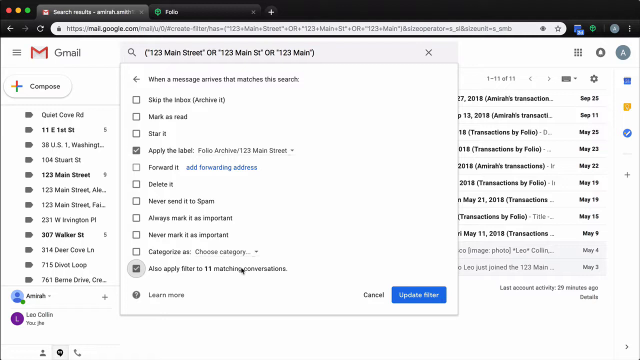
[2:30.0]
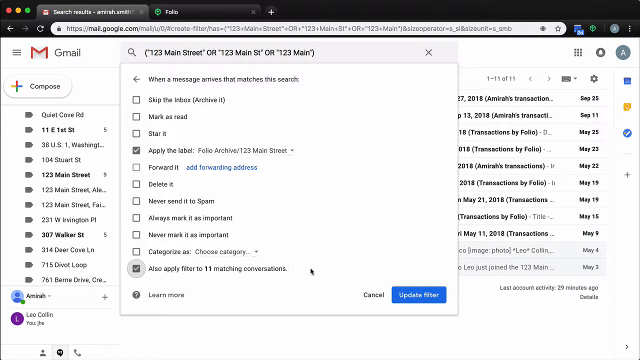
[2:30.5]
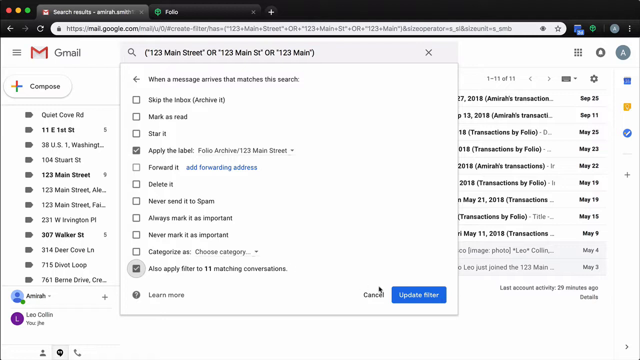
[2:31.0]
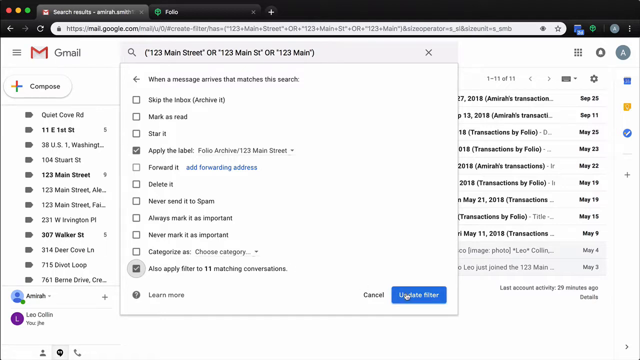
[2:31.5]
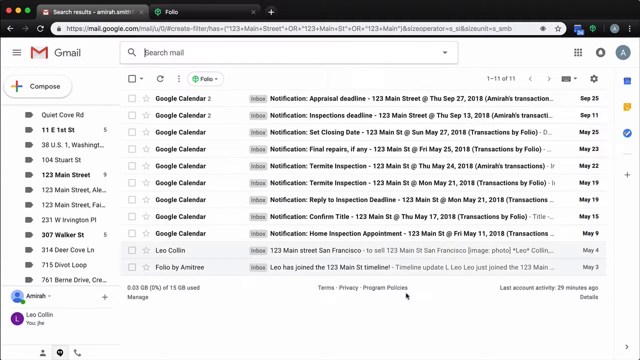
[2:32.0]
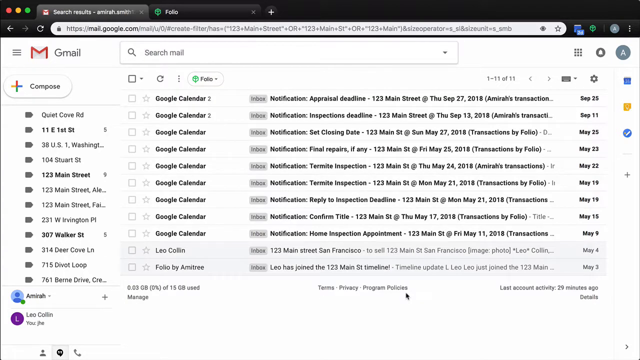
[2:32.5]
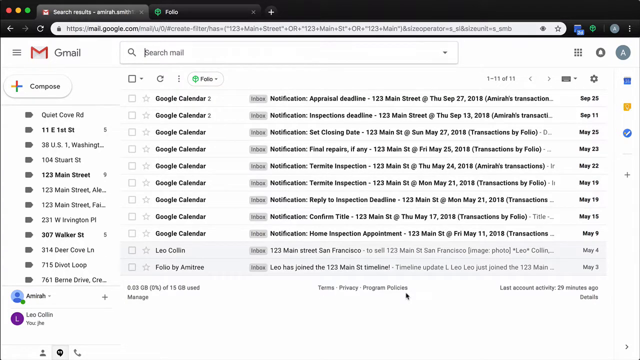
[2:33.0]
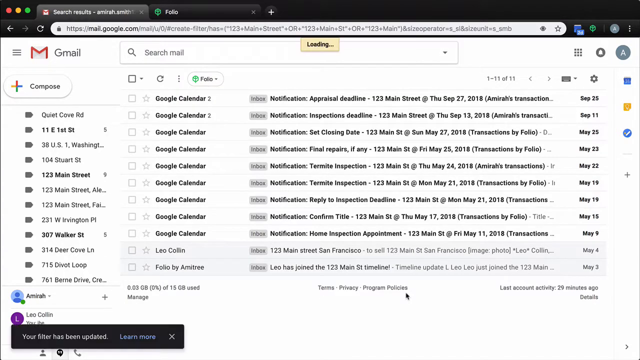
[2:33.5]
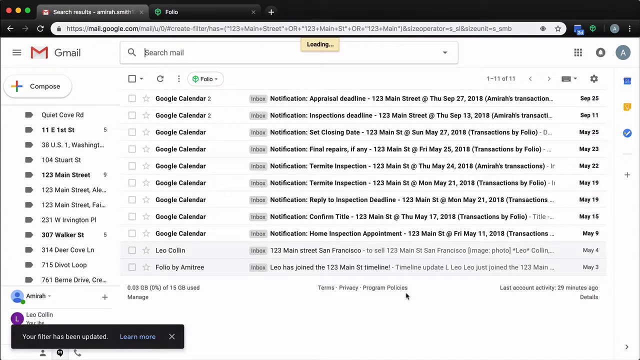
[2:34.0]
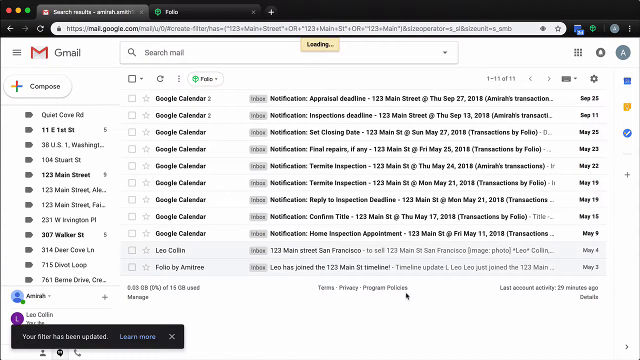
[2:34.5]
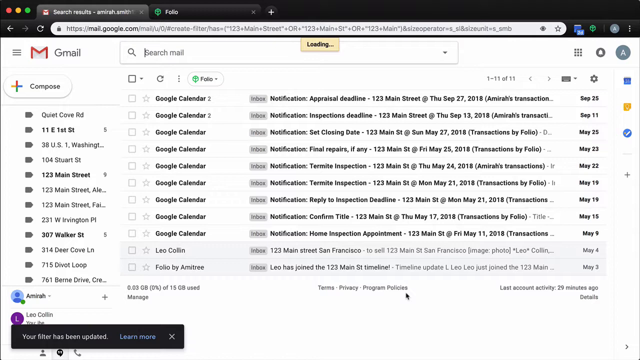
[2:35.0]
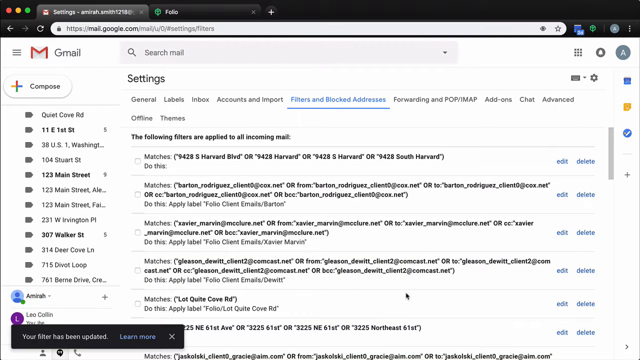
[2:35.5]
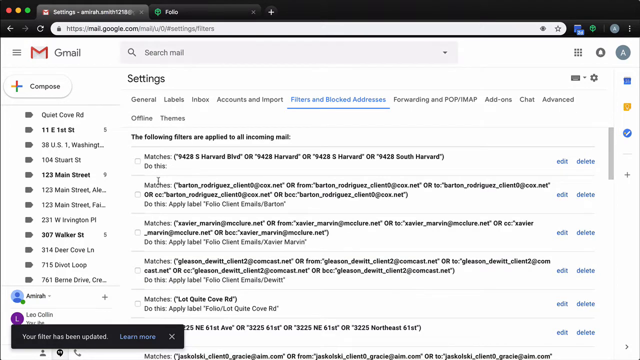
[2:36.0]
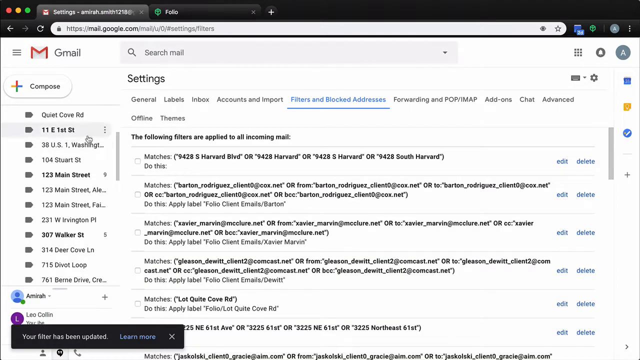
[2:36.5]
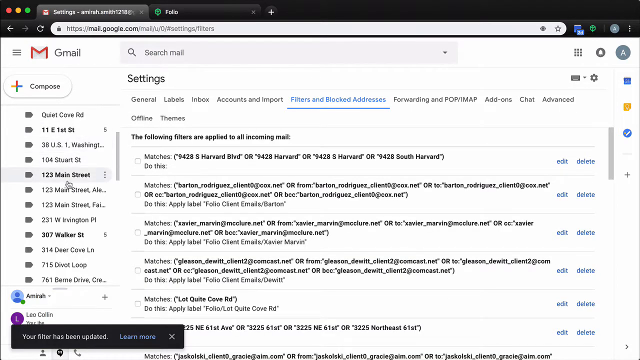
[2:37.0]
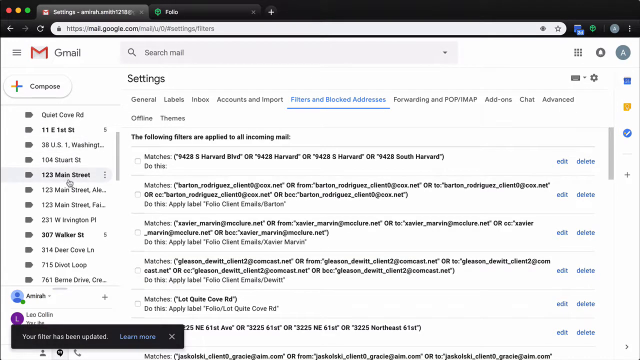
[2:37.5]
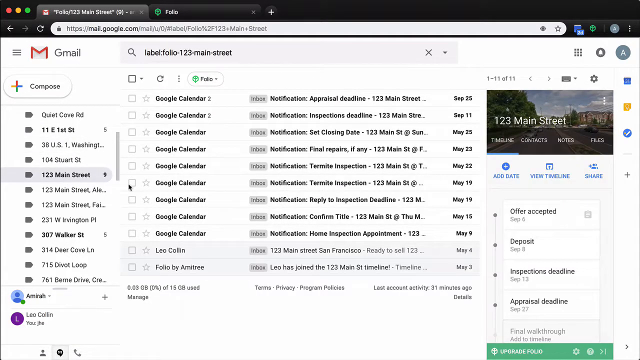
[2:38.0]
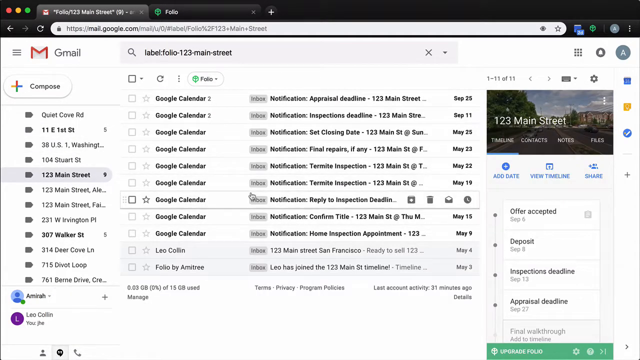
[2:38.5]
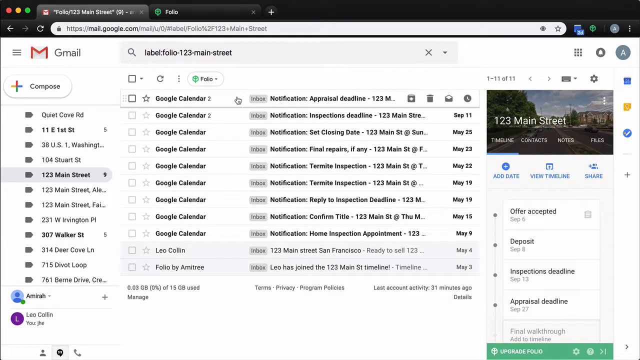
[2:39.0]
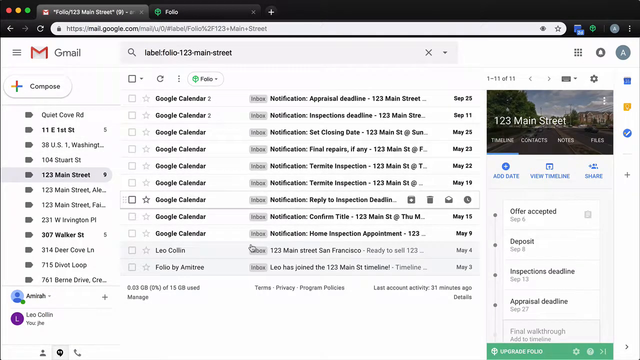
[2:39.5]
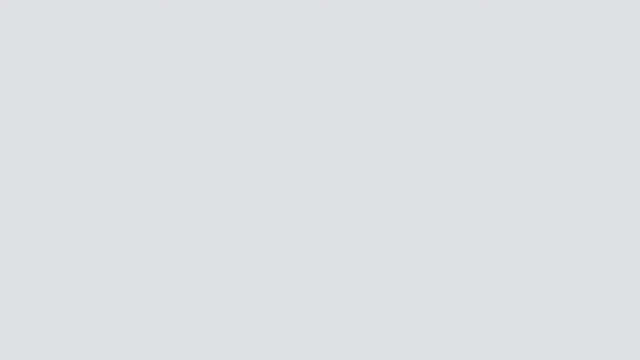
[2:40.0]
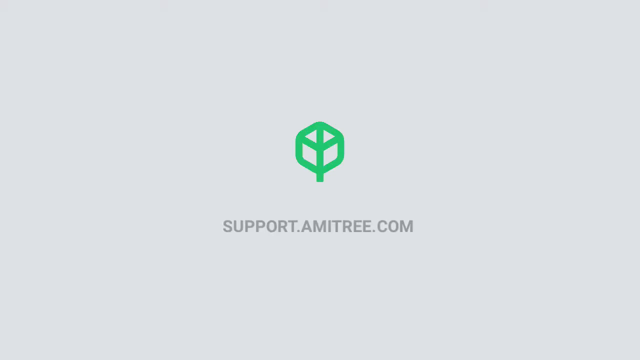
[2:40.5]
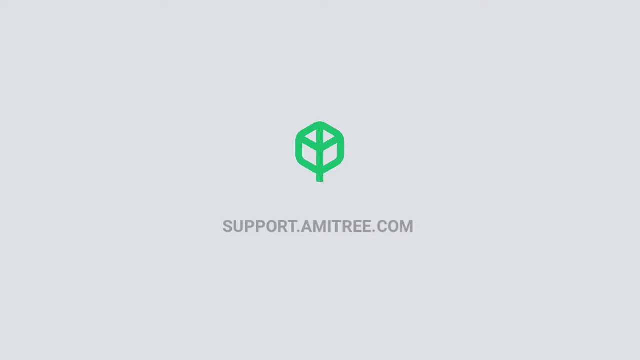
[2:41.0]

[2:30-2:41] The user hovers on the update filter button at the bottom right of the pop-up and clicks it; Gmail loads and returns to the settings. The user then clicks one of the flagged emails on the left side, the one for 123 Main Street, and the 123 Main Street inbox appears. All these flagged emails contain the keyword 123 Main Street, 123 Main ST or 123 Main. There are 9 unread messages containing 123 Main Street, and the other 2 have been read.